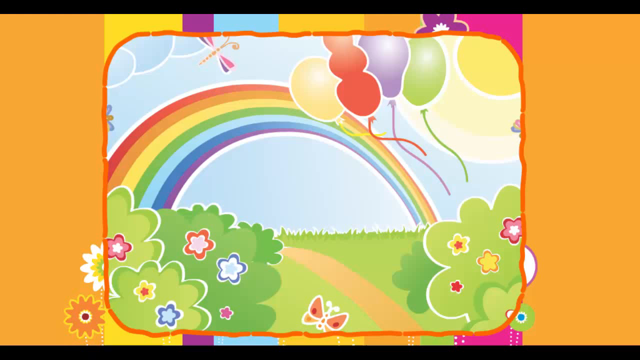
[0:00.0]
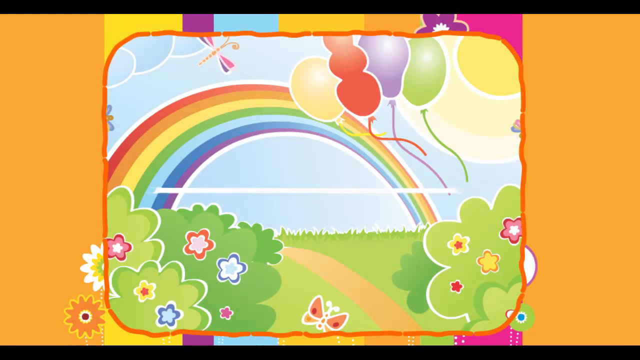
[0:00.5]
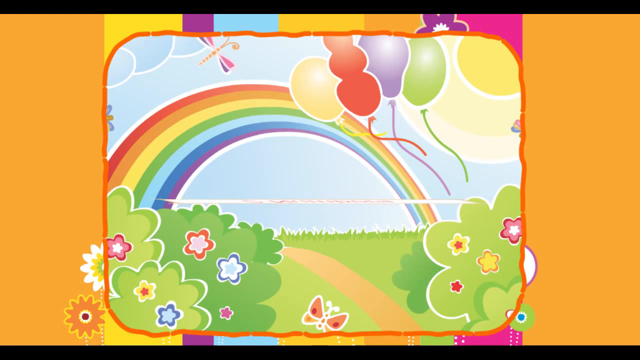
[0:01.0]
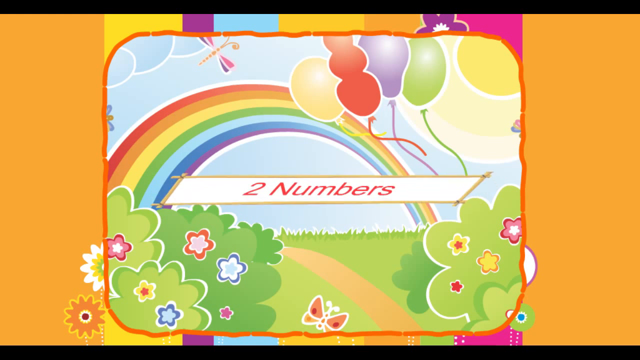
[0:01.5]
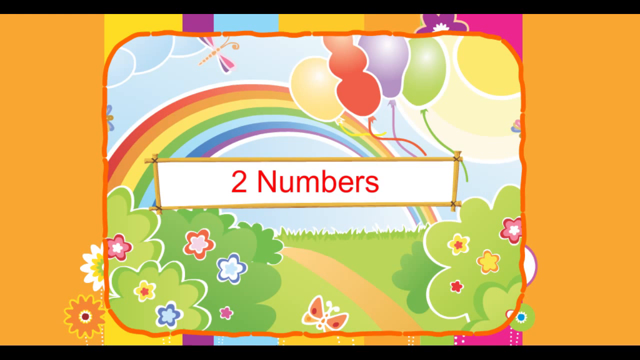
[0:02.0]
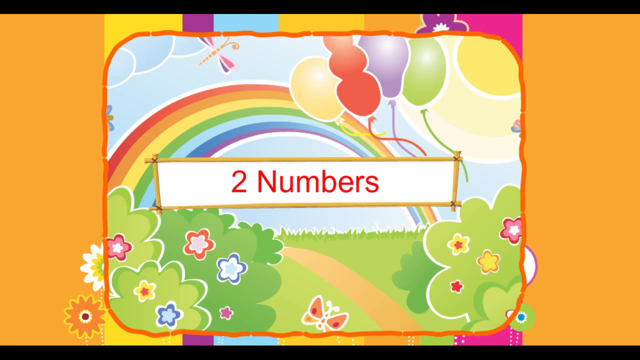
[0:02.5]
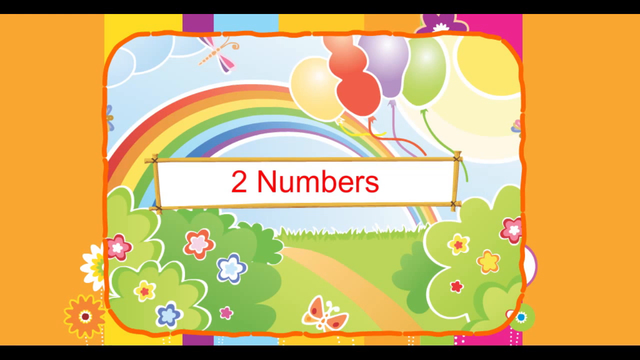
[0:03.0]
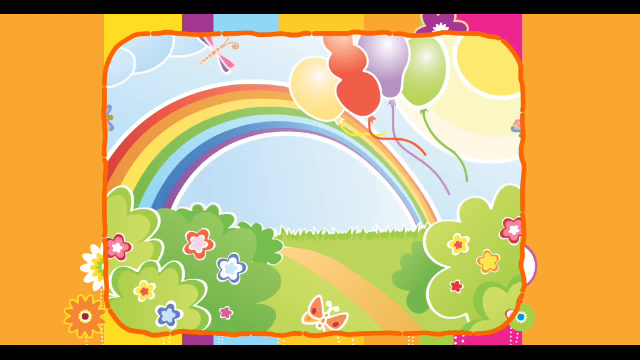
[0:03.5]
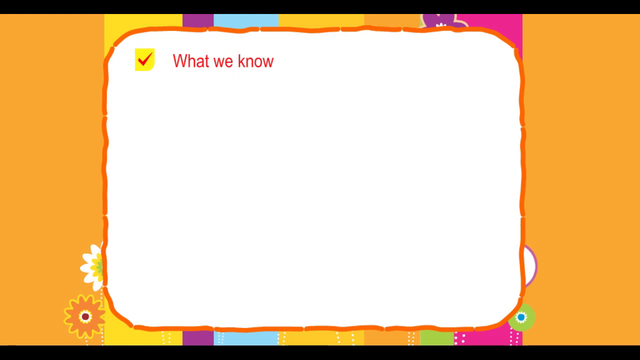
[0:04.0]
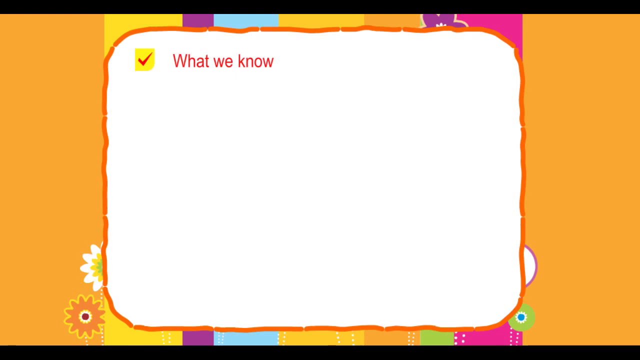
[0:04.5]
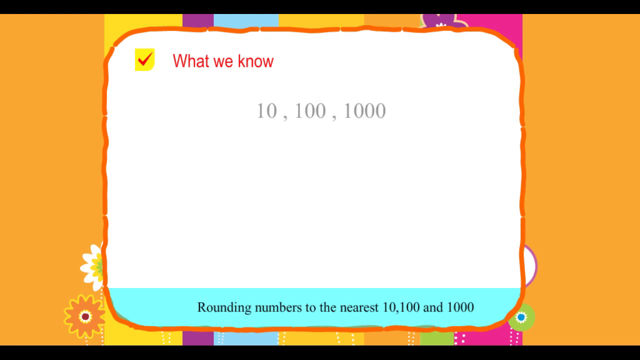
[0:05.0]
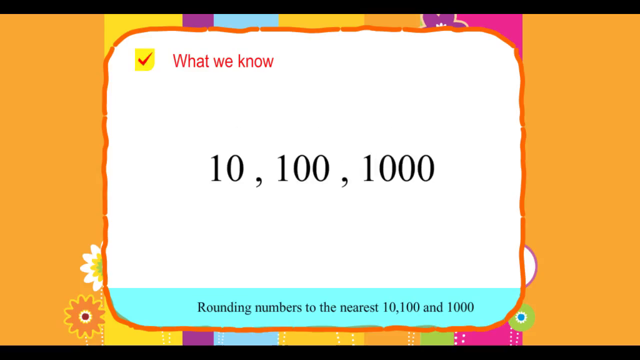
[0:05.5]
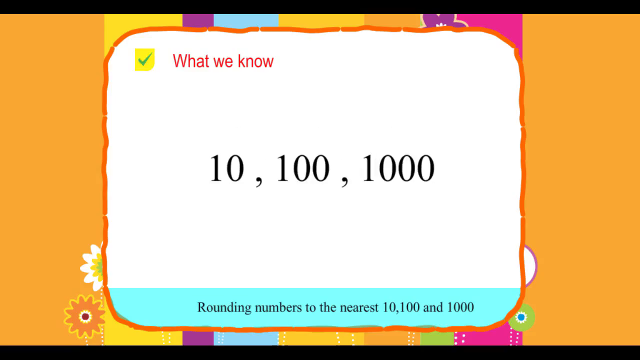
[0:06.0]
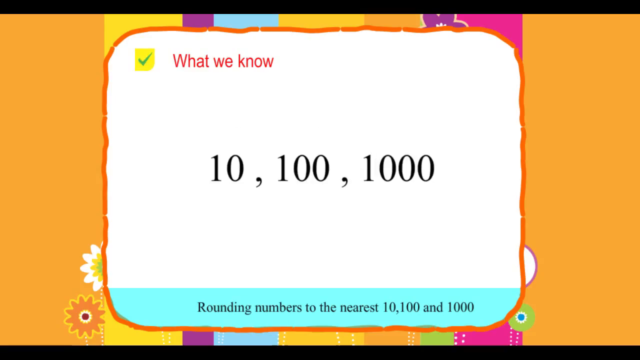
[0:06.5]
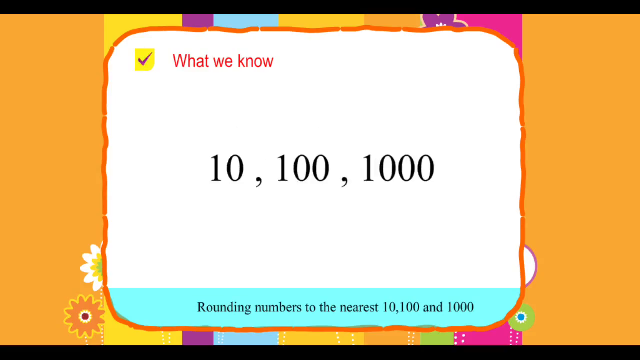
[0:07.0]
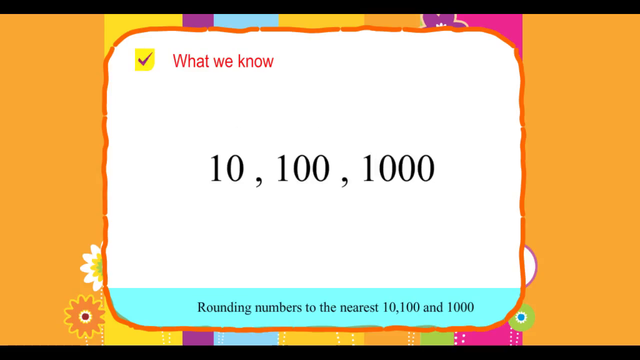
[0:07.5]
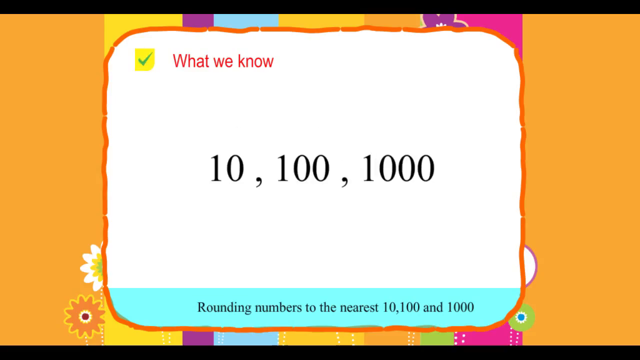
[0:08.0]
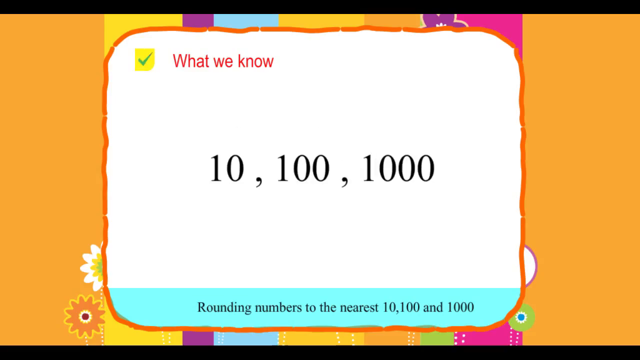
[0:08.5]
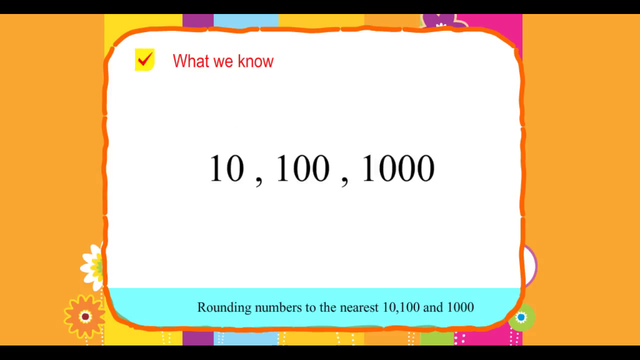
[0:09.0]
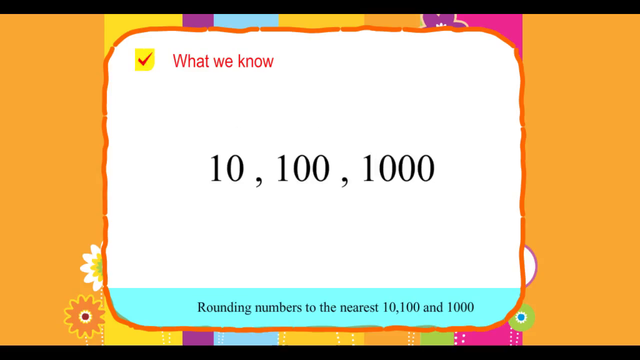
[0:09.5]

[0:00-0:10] The scene looks like a cartoon, with a playful yellow background. In the middle there is a rainbow and what looks like a park, with butterflies and a few bushes with colorful sunflowers. Balloons float in the air, giving it a celebratory look. On the far right is what looks like the sun, and on the far left what look like clouds. A banner with two numbers written on it pops up on screen. The scene then cuts to a blank screen, where a pop-up shows a tick and the words "what we know" in red. Below that, in a bigger font, are three numbers, 10, 100, 1000, and below them the text "rounding numbers to the nearest 10, 100, 1000" as the tick turns red.